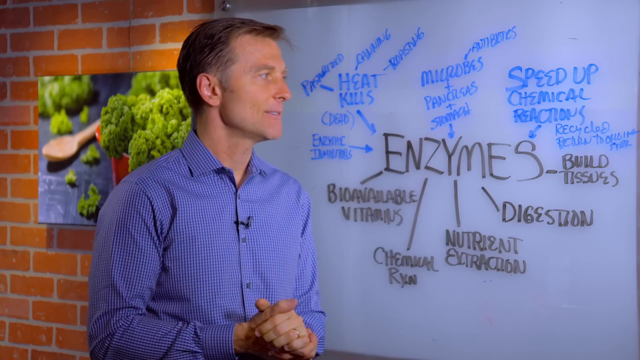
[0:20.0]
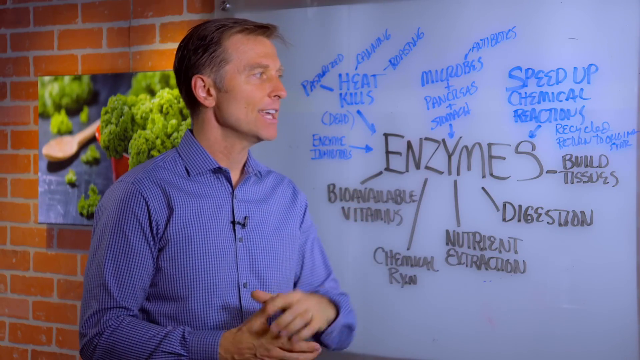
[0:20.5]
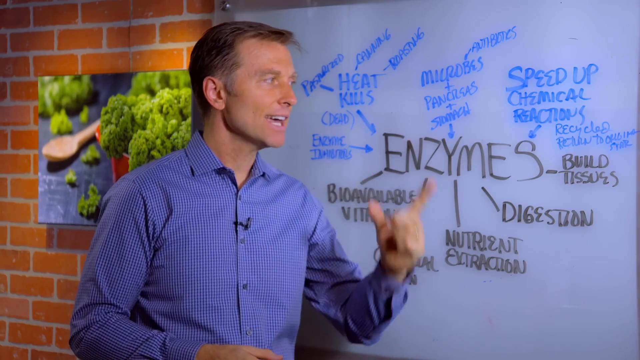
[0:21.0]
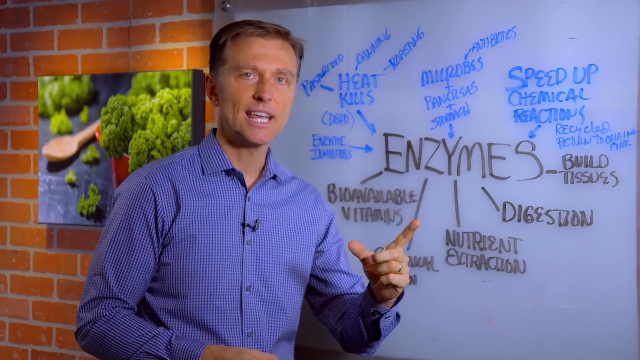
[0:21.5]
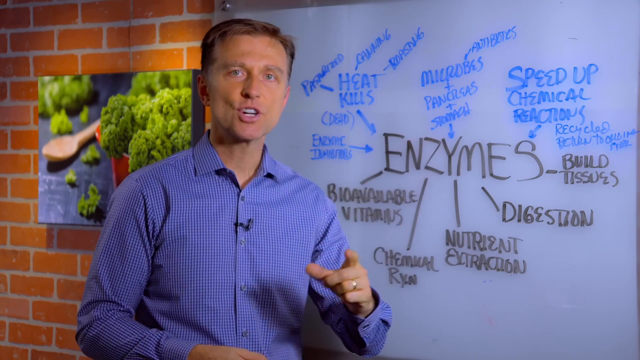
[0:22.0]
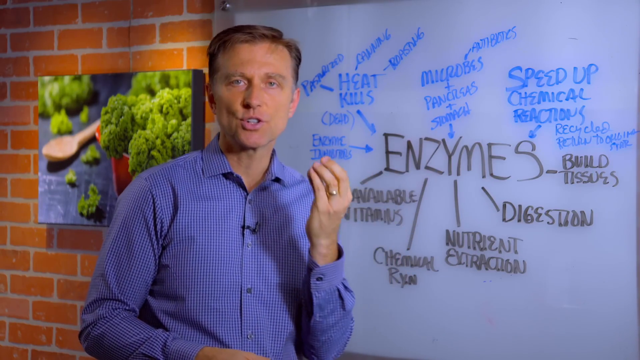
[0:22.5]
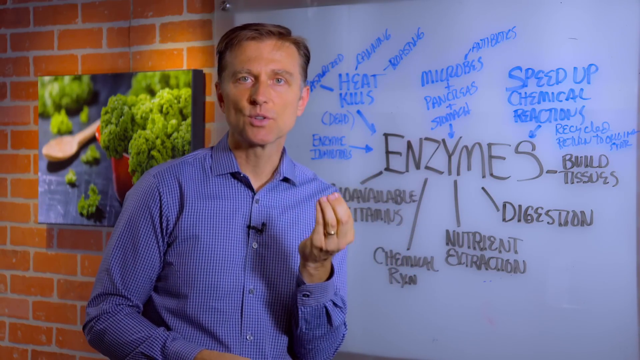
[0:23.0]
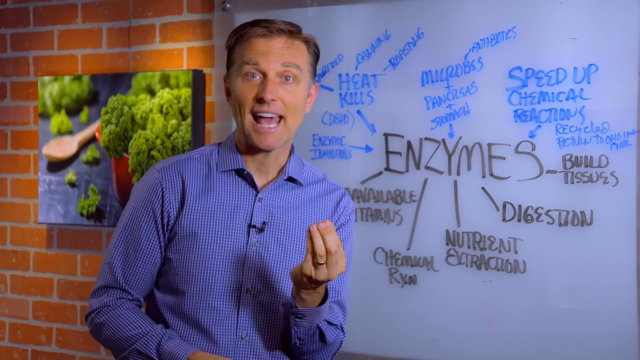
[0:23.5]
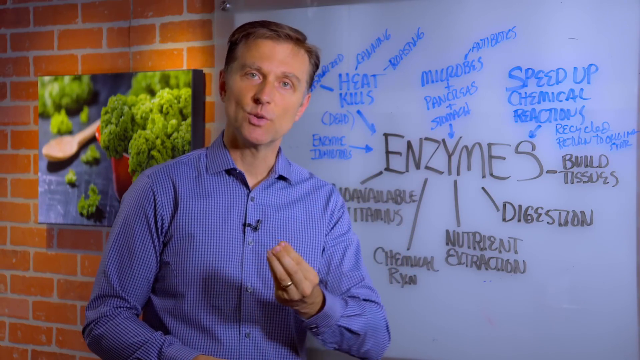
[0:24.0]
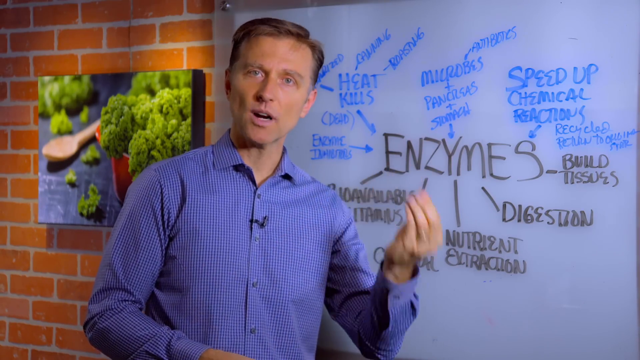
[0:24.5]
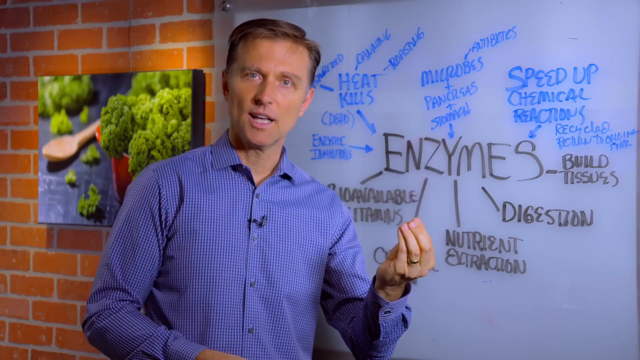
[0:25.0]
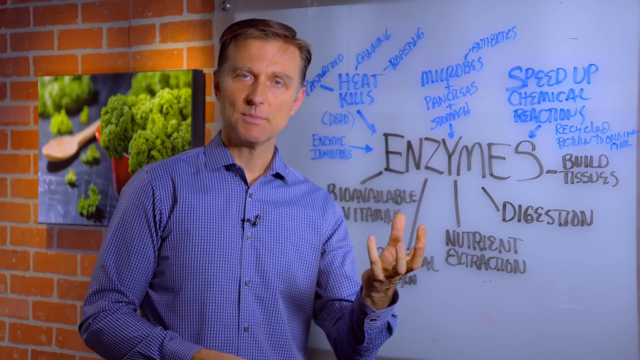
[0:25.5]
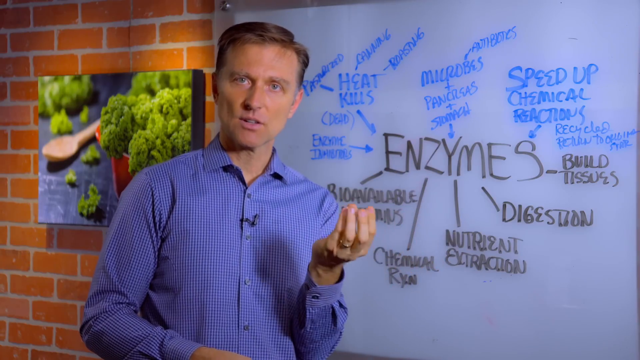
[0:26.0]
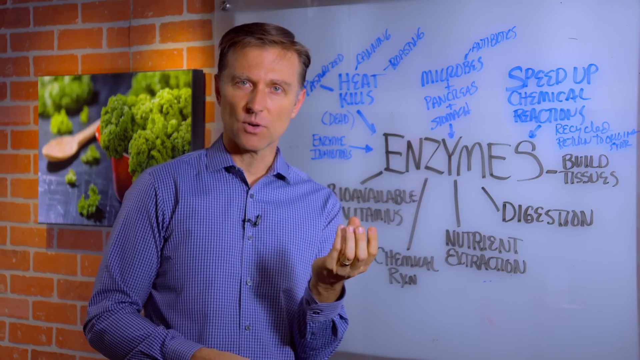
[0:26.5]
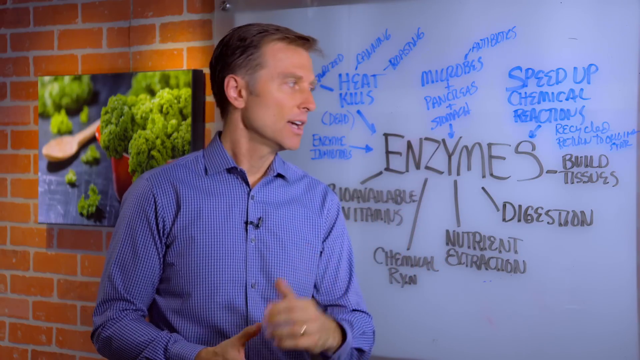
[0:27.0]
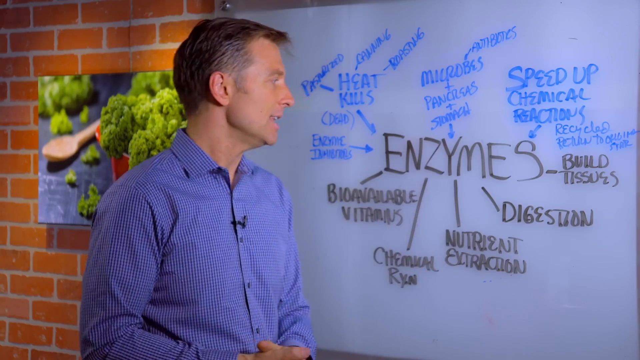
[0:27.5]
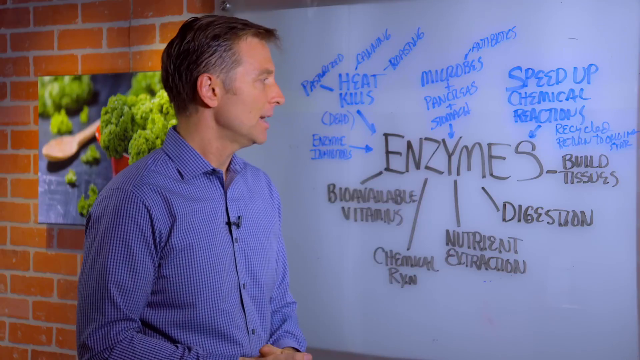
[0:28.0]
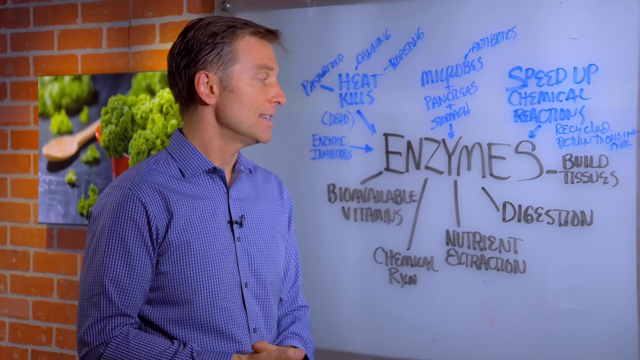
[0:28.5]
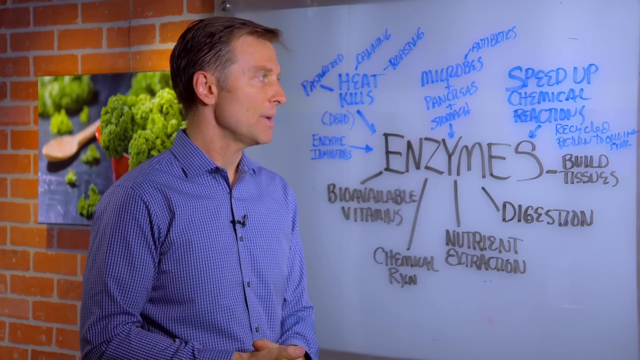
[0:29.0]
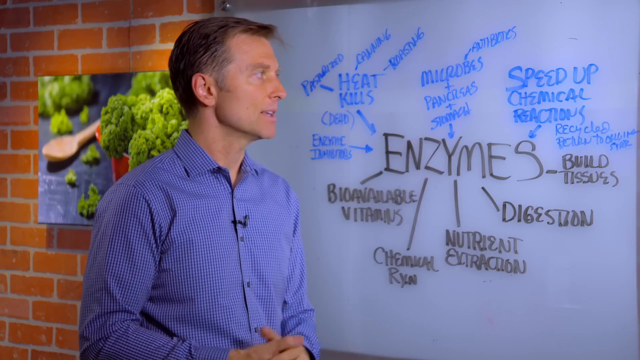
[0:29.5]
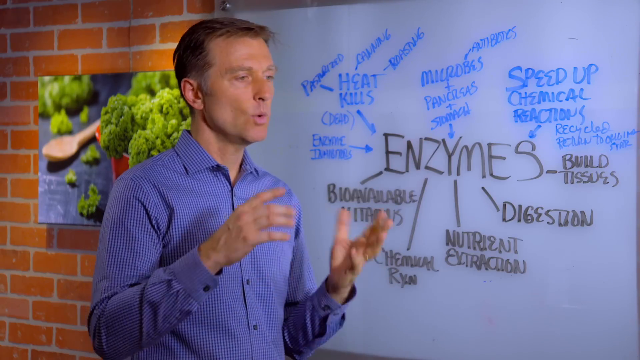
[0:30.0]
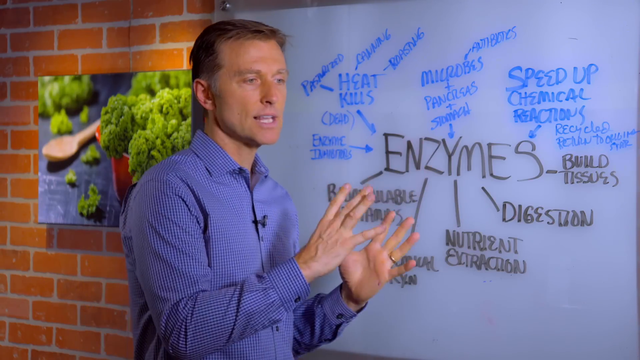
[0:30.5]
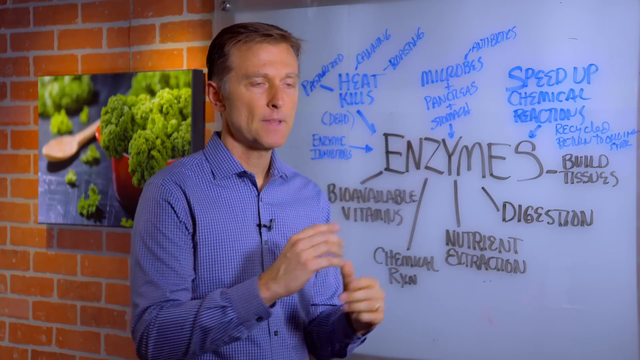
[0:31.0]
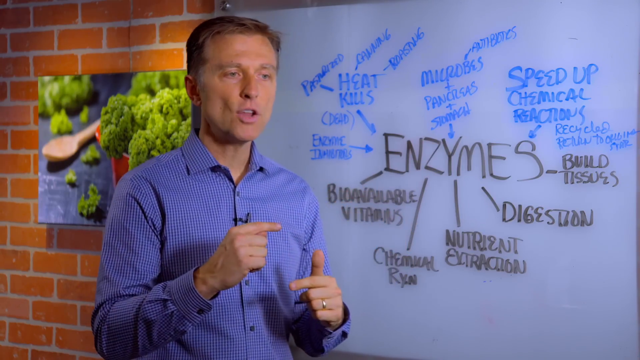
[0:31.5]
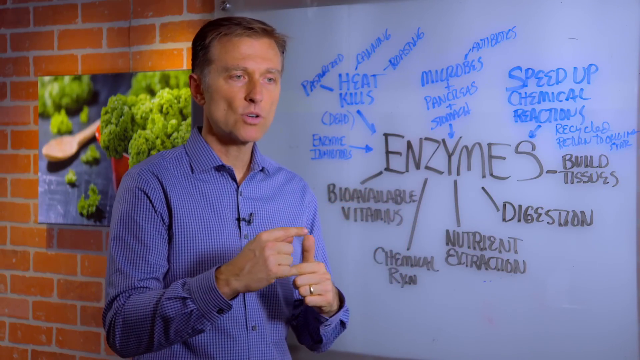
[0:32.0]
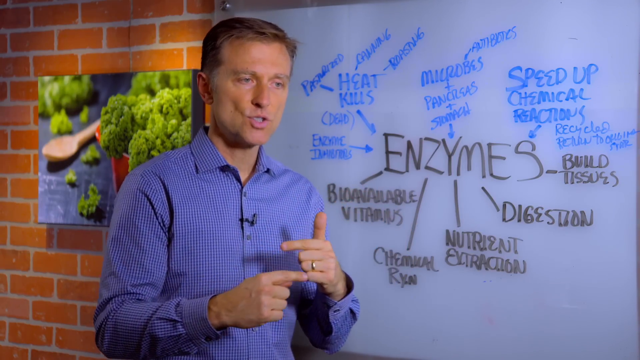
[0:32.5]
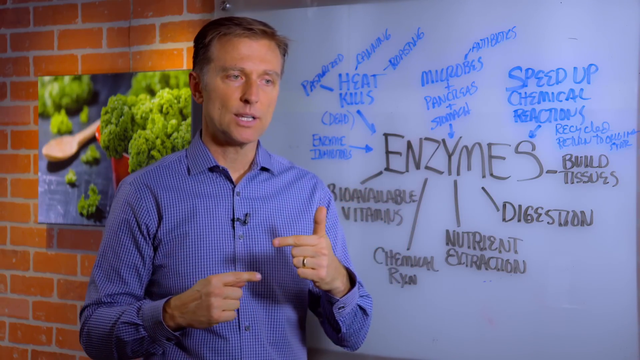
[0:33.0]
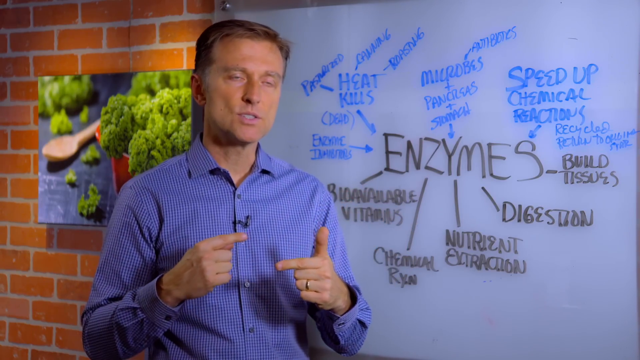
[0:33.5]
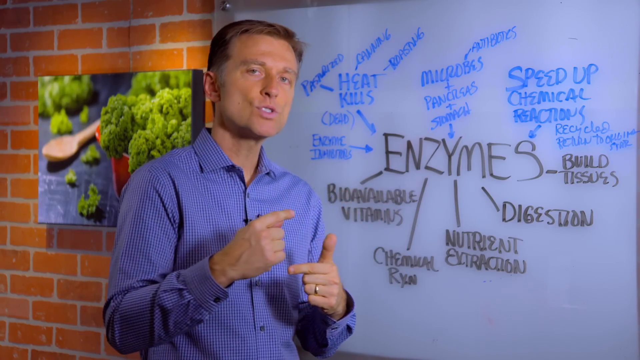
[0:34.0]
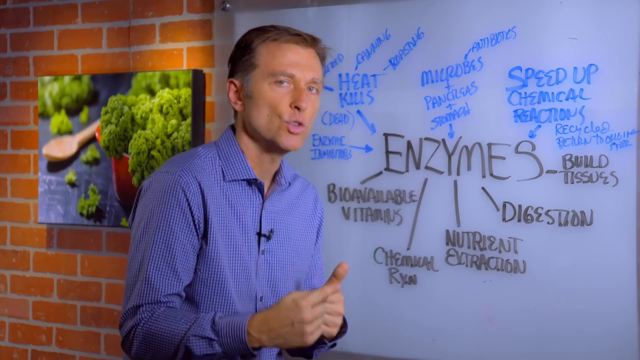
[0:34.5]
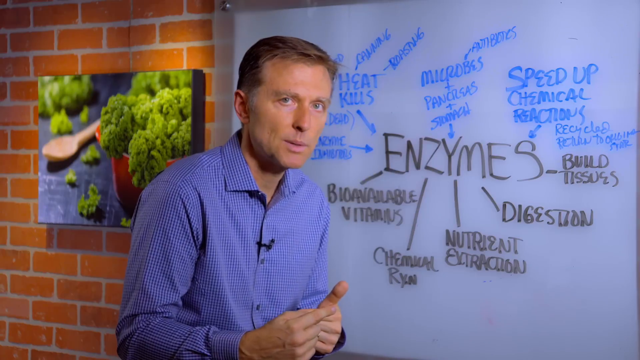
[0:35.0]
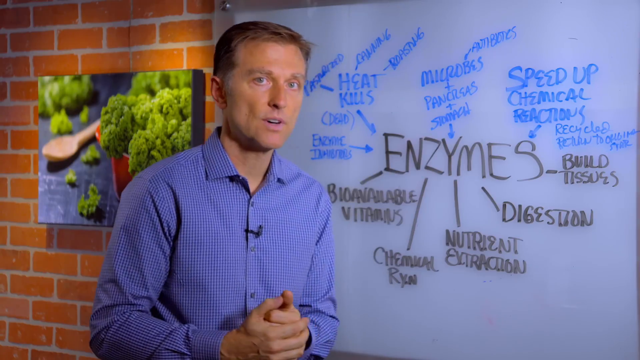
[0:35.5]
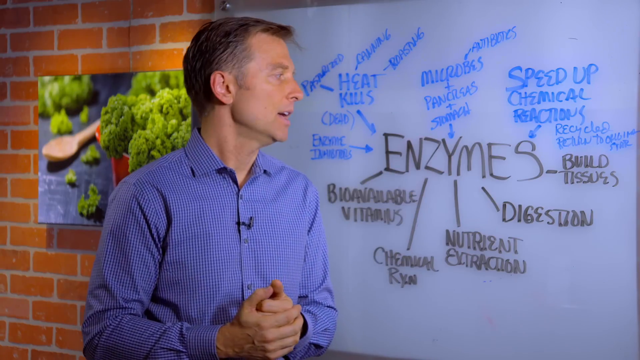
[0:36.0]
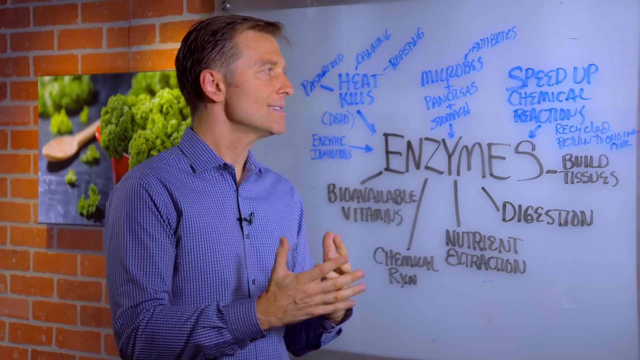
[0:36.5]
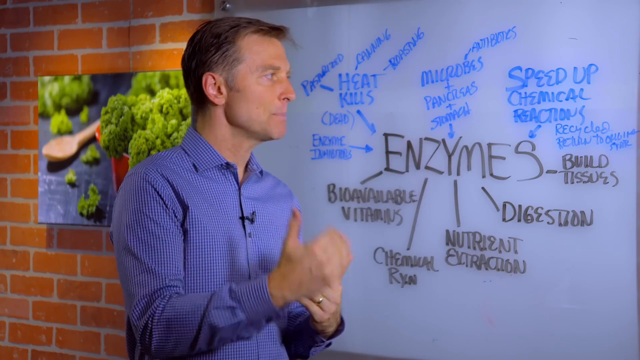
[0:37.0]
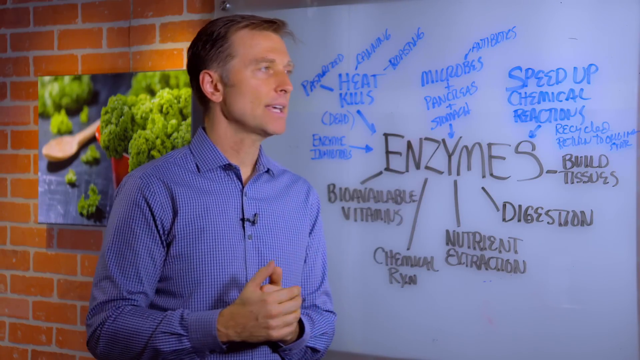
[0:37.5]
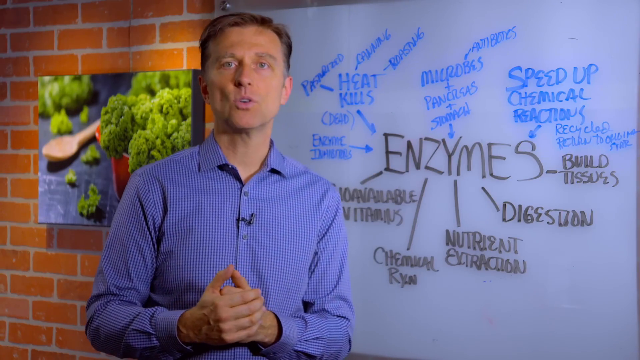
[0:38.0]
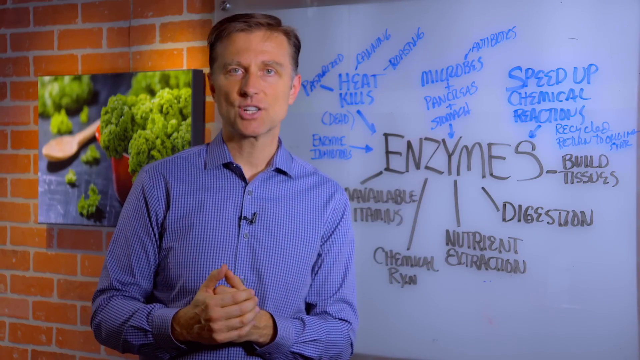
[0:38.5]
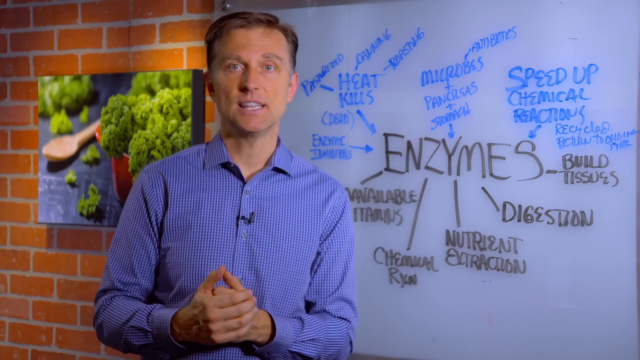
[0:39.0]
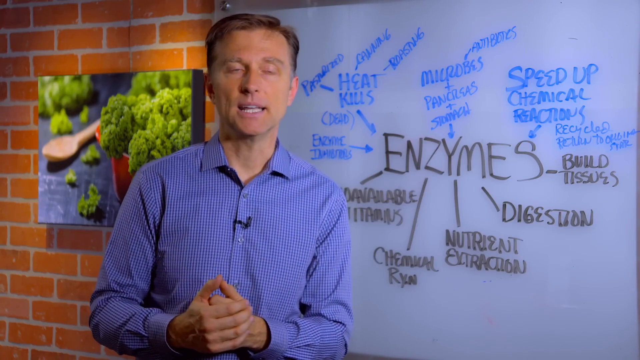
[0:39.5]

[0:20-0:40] The man talks and makes movements with his hands, some kind of rotation or movement. He then holds his hands with the fingers pointed at each other, making pantomime-like movements, and keeps looking at the board and at the camera.